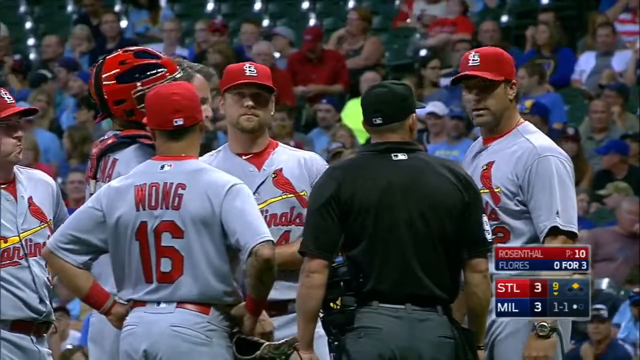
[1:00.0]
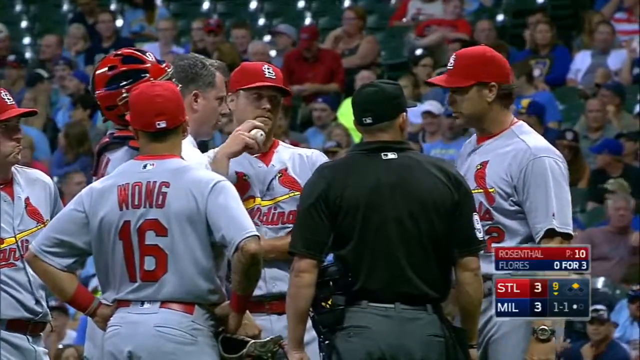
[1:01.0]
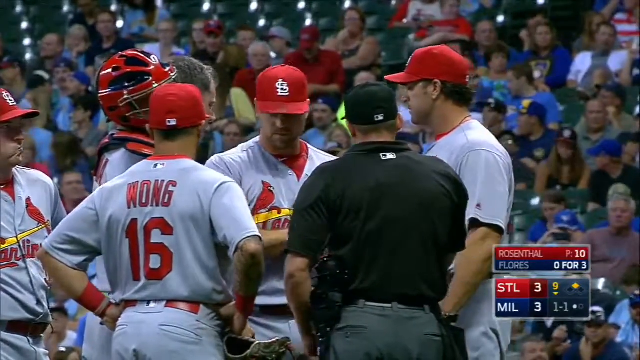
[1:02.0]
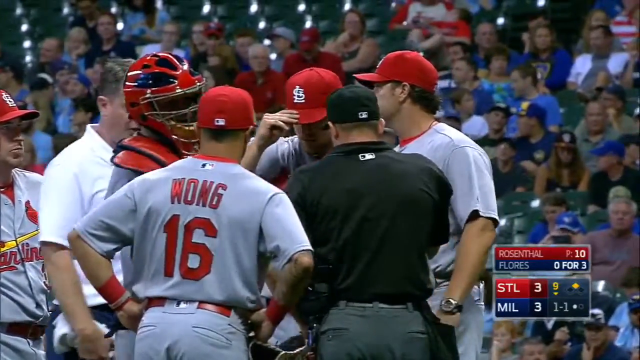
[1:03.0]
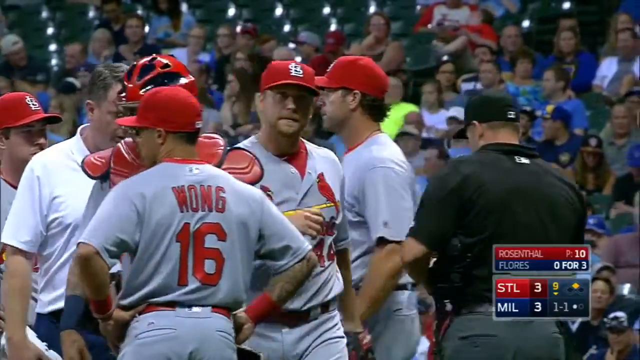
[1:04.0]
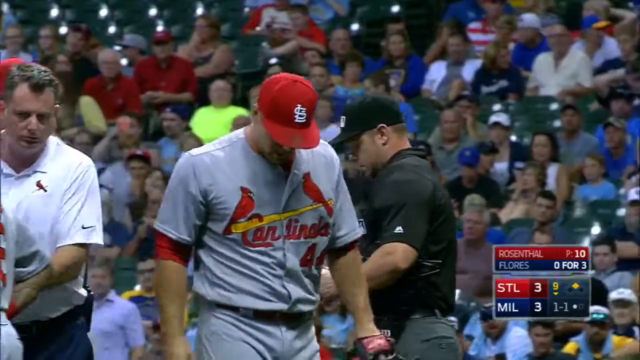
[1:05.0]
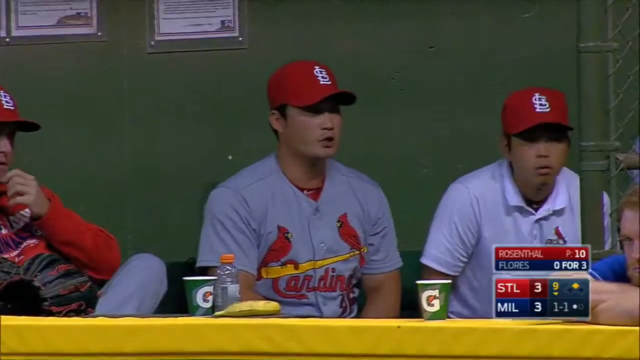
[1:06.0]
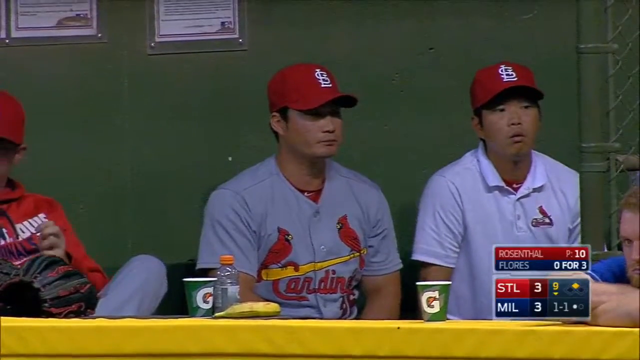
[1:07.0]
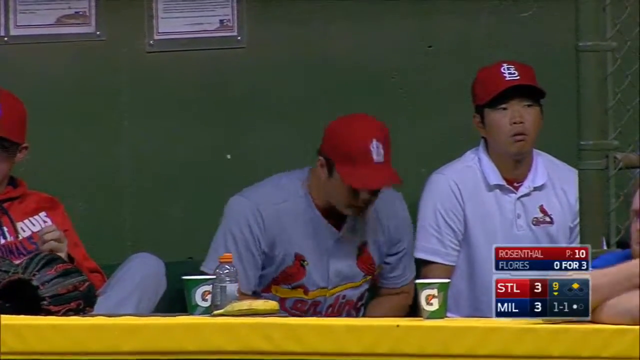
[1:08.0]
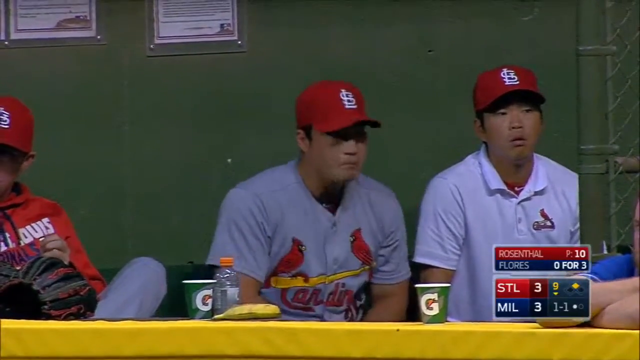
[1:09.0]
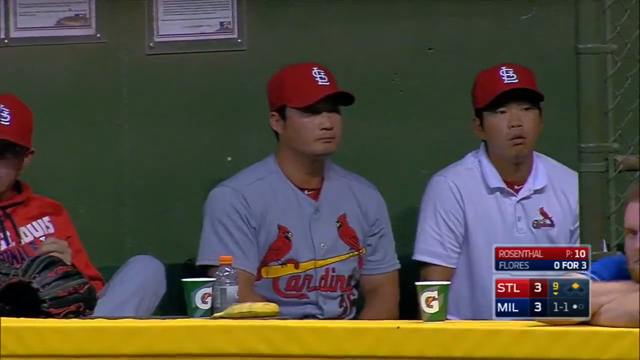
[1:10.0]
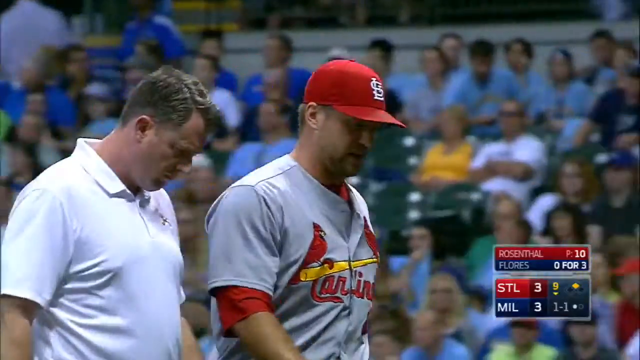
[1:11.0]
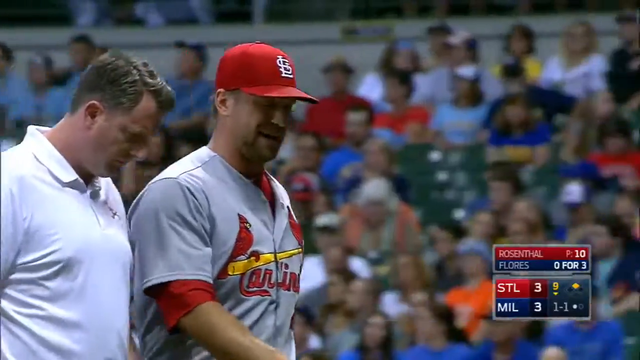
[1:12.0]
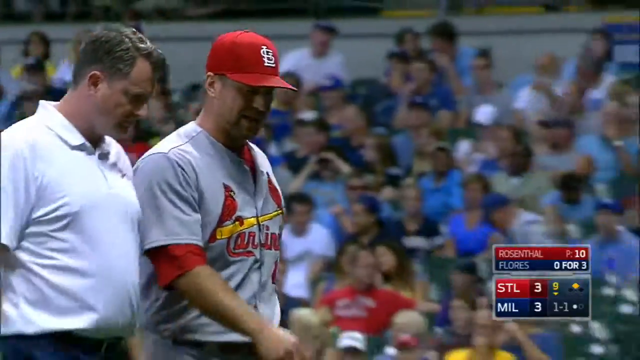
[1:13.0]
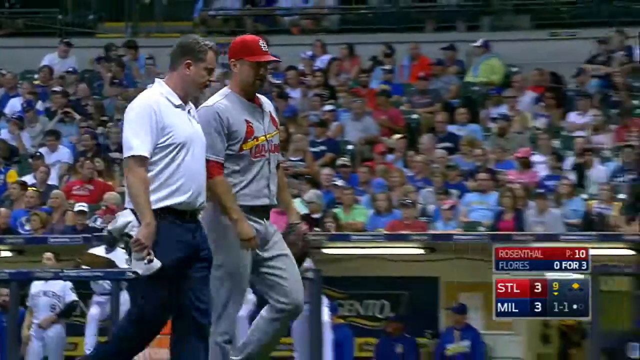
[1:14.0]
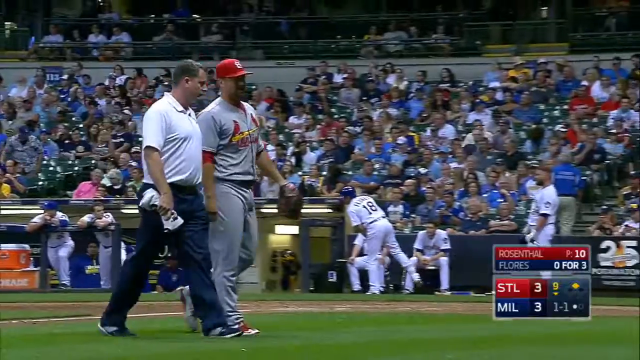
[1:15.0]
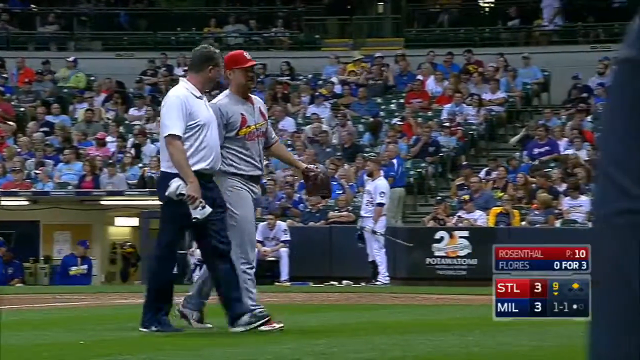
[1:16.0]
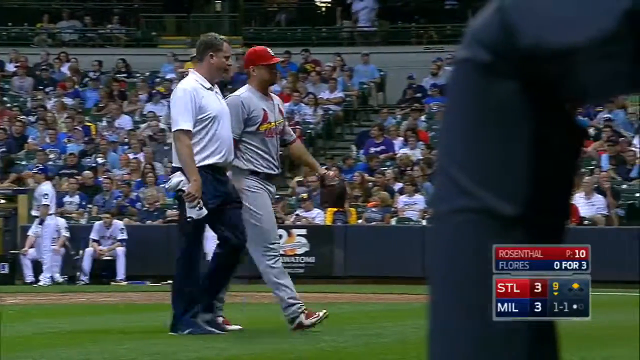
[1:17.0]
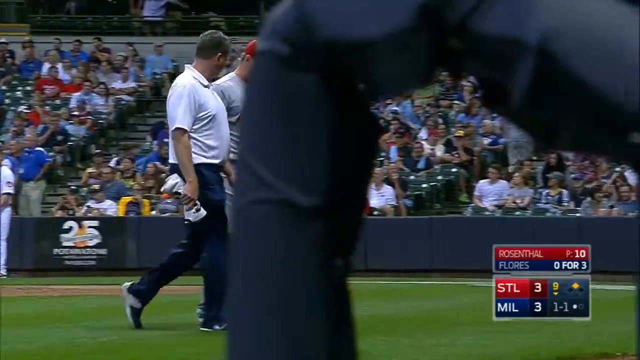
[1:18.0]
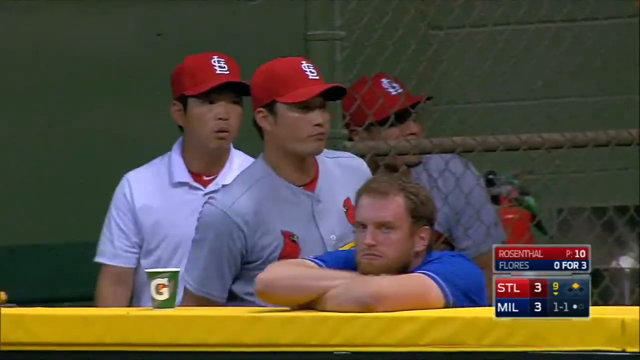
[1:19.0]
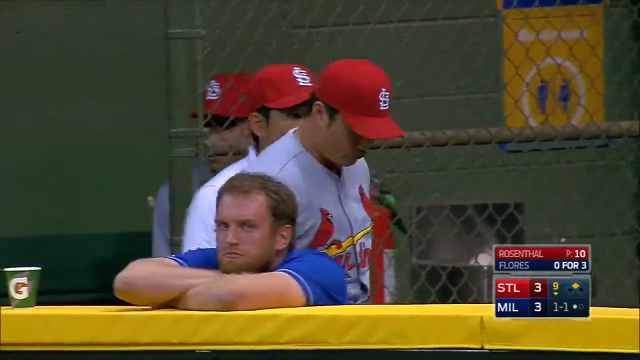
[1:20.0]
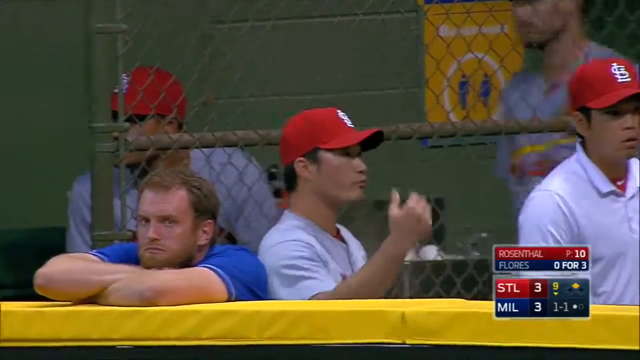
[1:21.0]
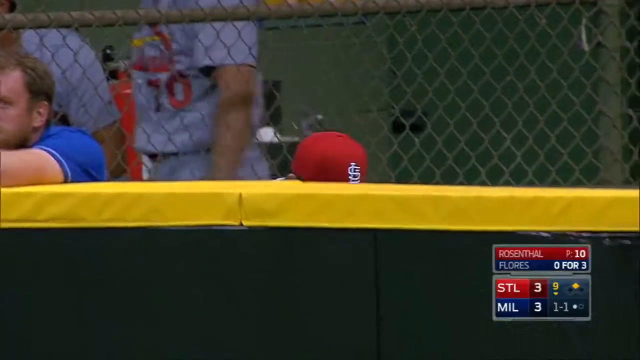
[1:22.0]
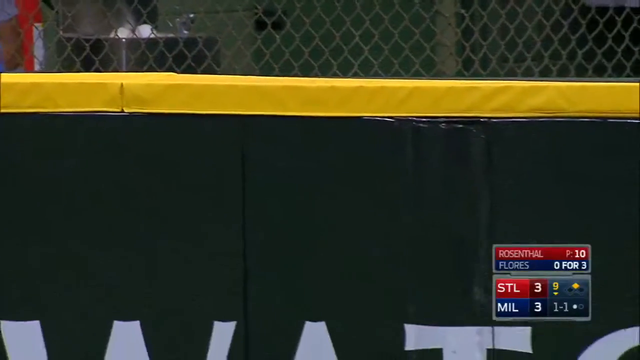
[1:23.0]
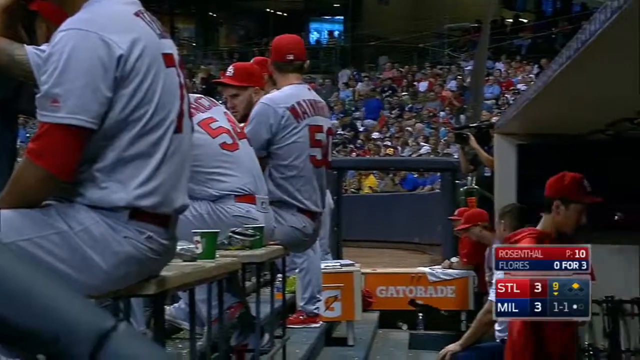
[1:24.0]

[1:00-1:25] The game between the Cardinals and the Brewers seems to be temporarily stopped, and the pitcher may be injured. A sidebar meeting takes place with the Cardinals pitcher and a few other people around him, maybe including a replacement pitcher. They wear gray uniforms with red writing, and one of them is number 16, Wong. A little of the crowd is visible, with some empty green seats and people in the stands wearing reds, greens and blues. One man is dressed in a black outfit; it is unclear whether he is a coach, a doctor or something else. The meeting breaks up. The view focuses on two Asian players in the dugout, where the walls are green; they wear gray outfits and red caps. The man dressed in white walks off the field with the pitcher, who appears to be injured. One of the Asian players is probably going to replace him as pitcher.